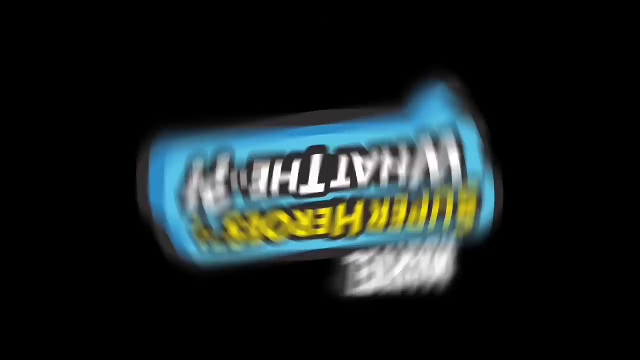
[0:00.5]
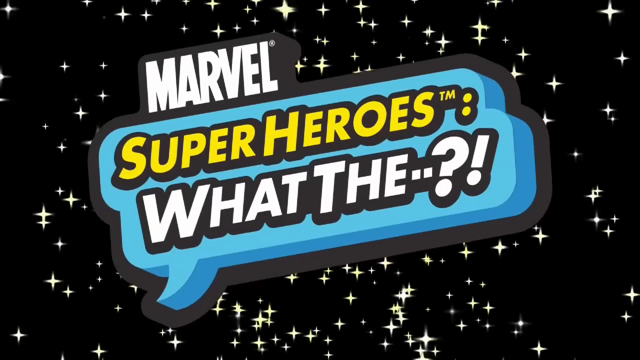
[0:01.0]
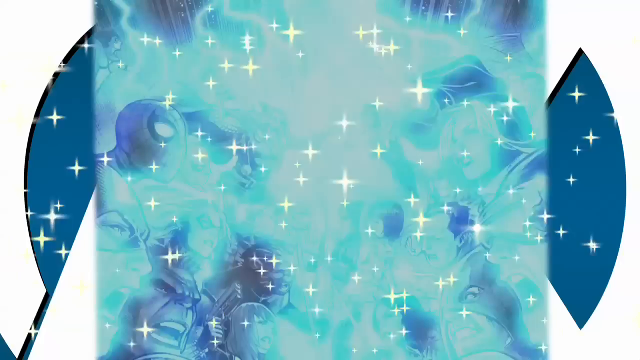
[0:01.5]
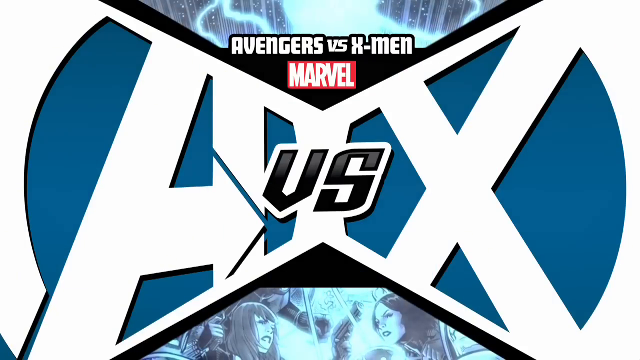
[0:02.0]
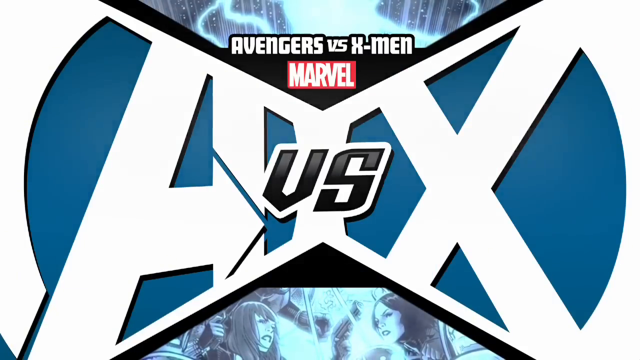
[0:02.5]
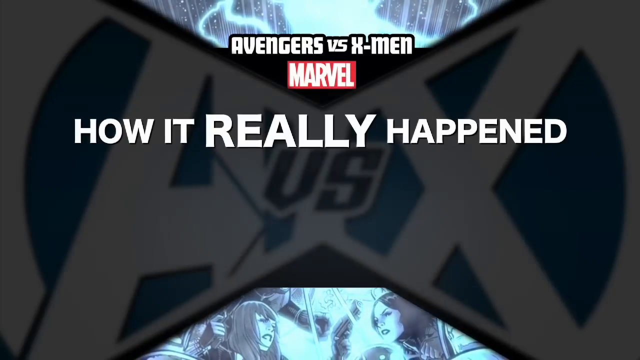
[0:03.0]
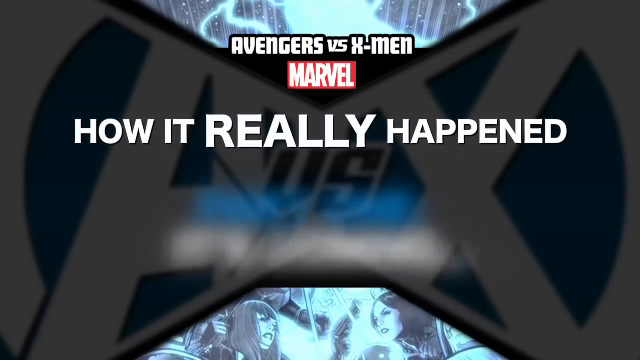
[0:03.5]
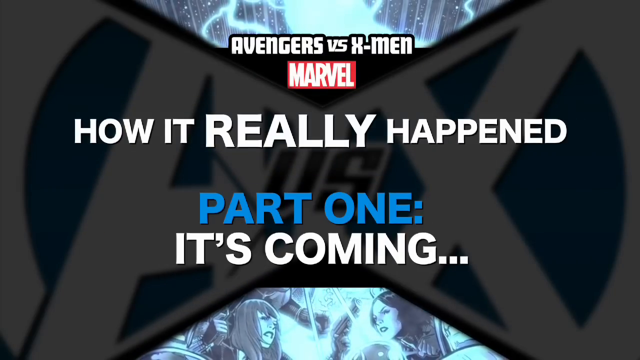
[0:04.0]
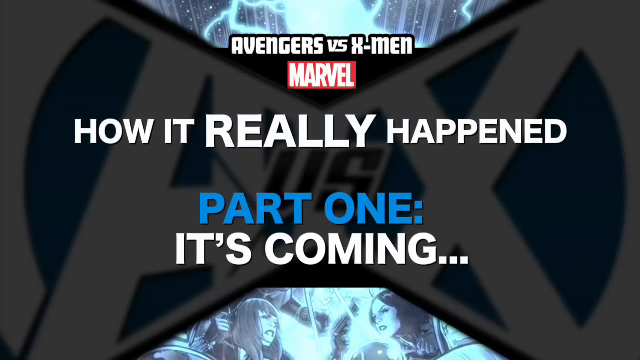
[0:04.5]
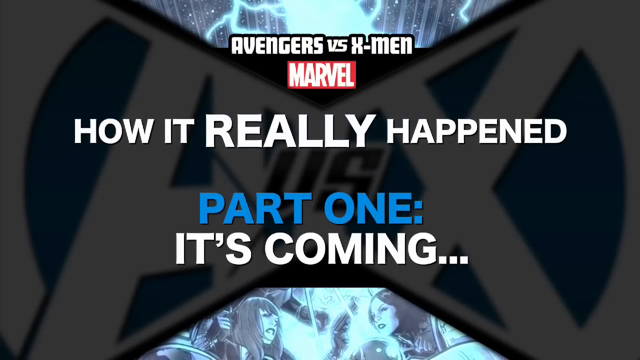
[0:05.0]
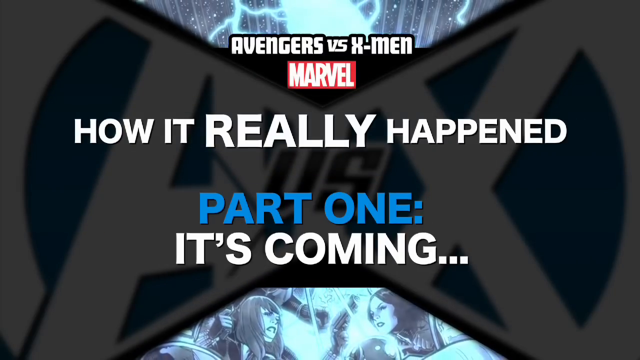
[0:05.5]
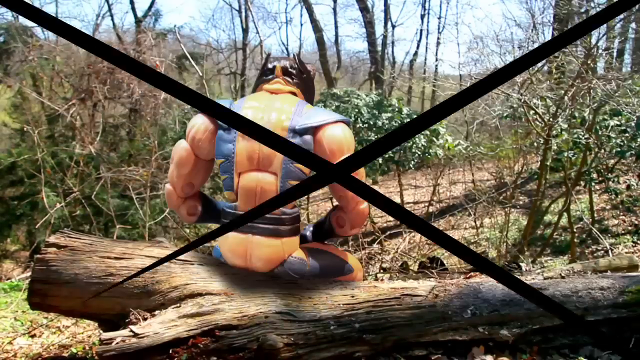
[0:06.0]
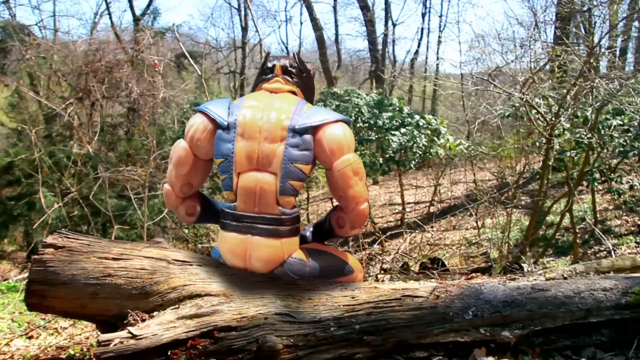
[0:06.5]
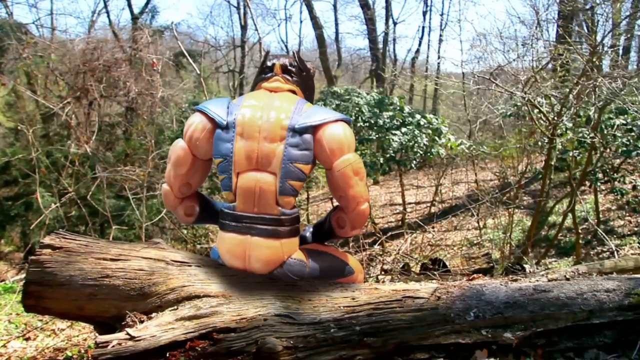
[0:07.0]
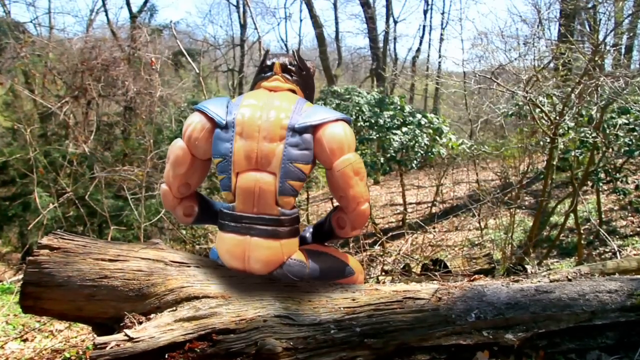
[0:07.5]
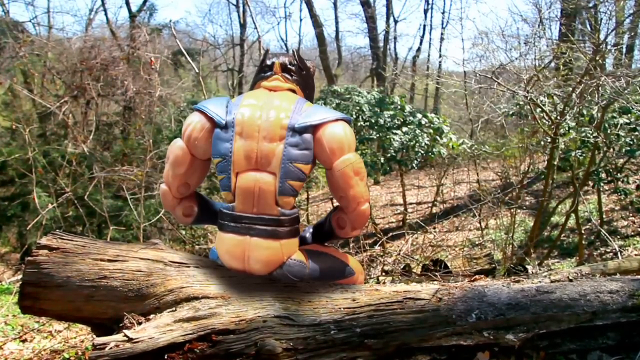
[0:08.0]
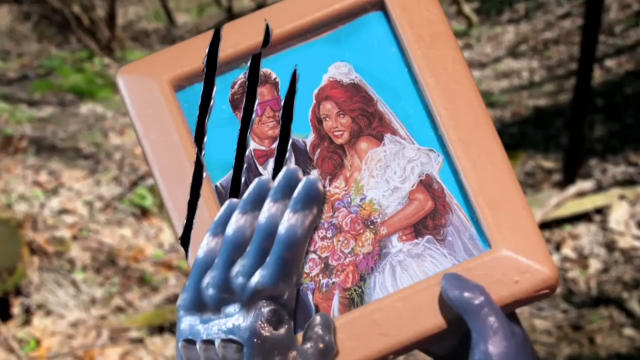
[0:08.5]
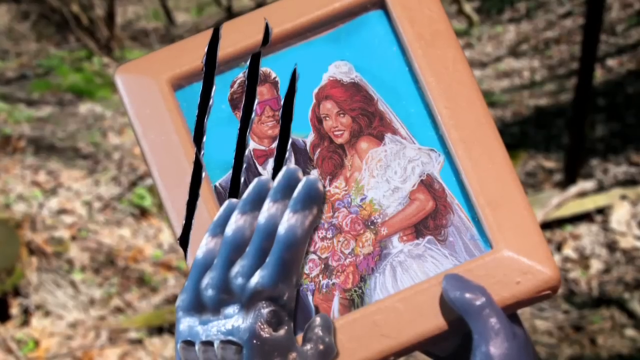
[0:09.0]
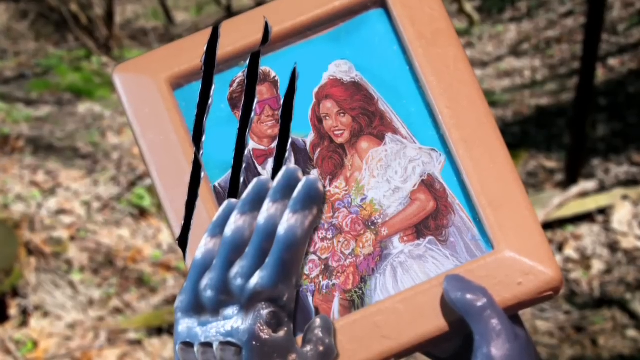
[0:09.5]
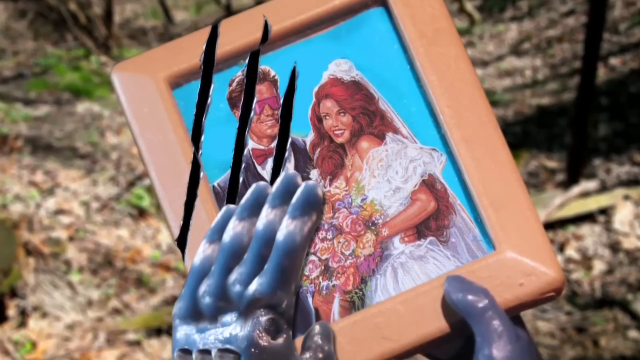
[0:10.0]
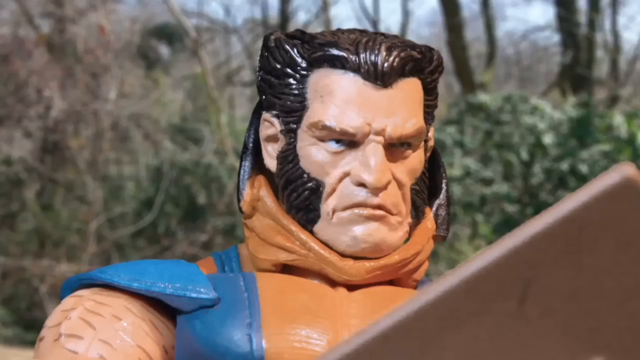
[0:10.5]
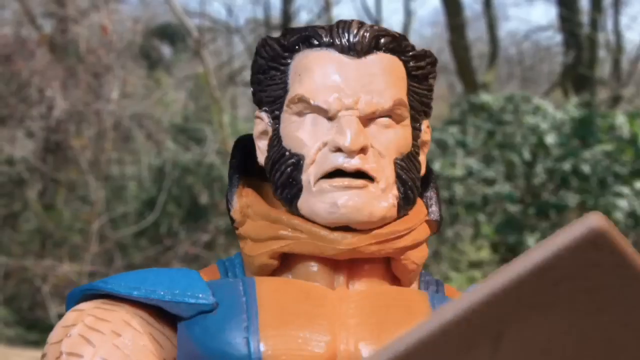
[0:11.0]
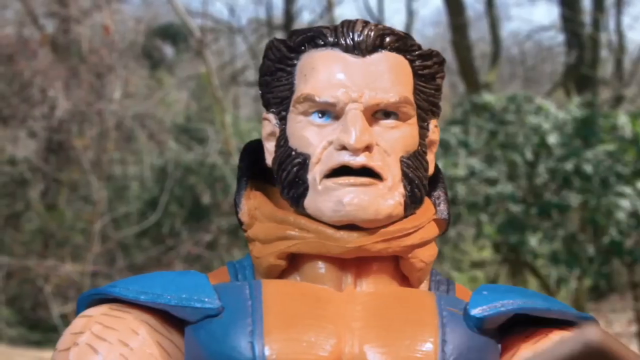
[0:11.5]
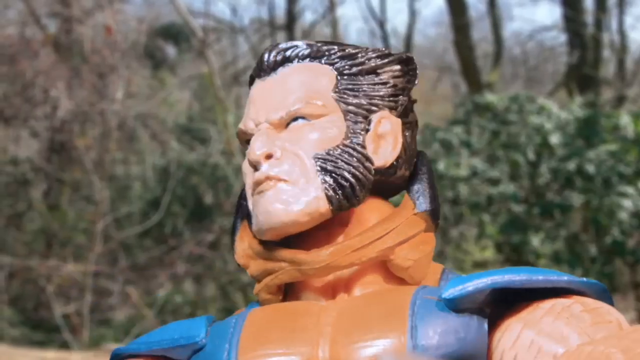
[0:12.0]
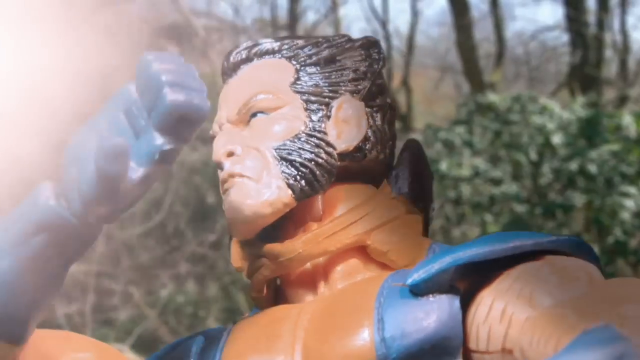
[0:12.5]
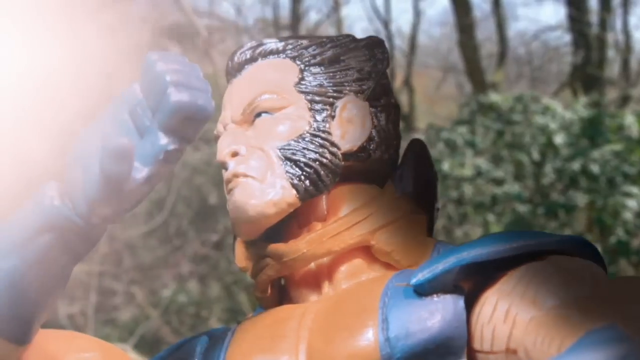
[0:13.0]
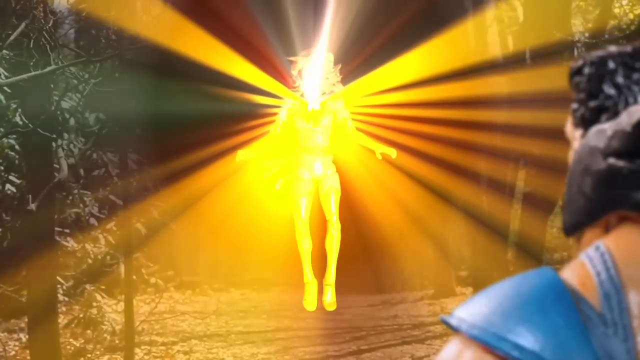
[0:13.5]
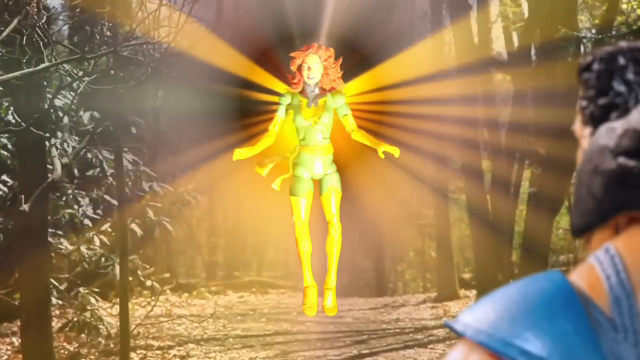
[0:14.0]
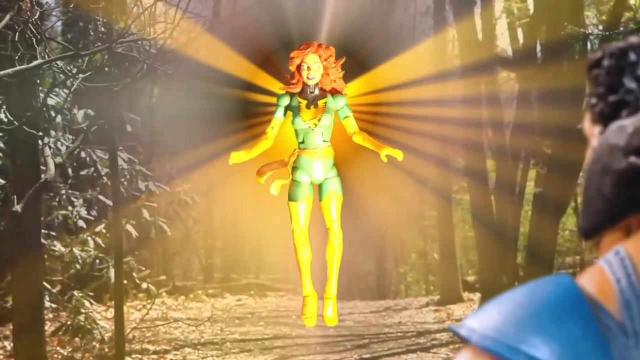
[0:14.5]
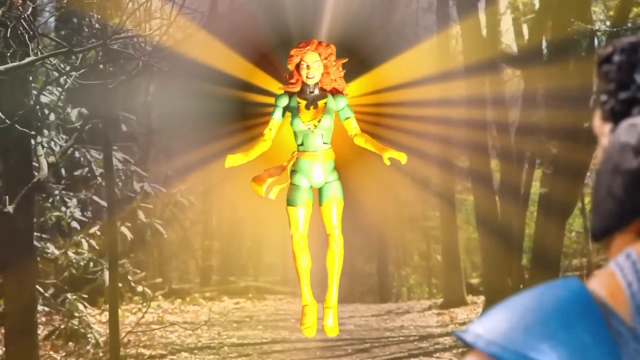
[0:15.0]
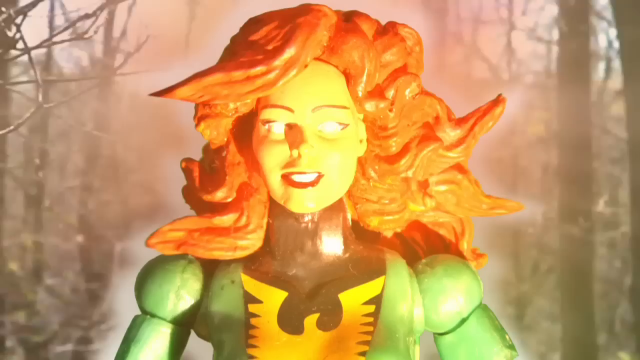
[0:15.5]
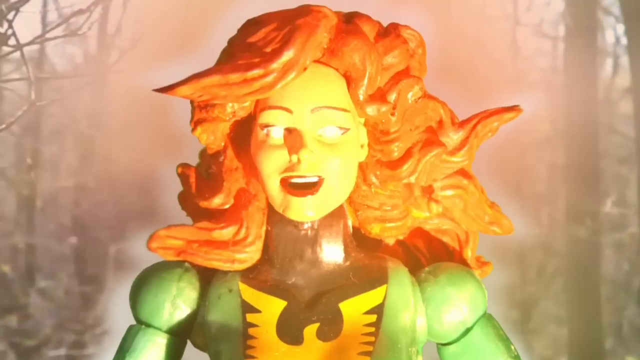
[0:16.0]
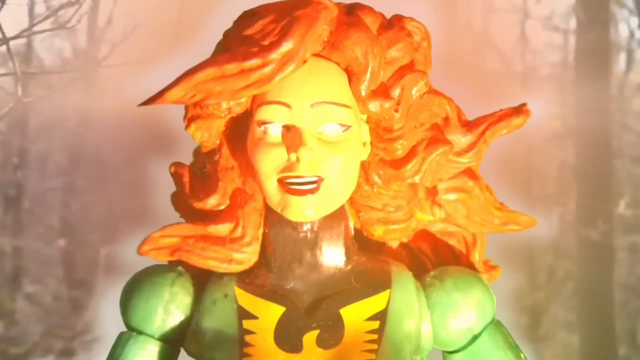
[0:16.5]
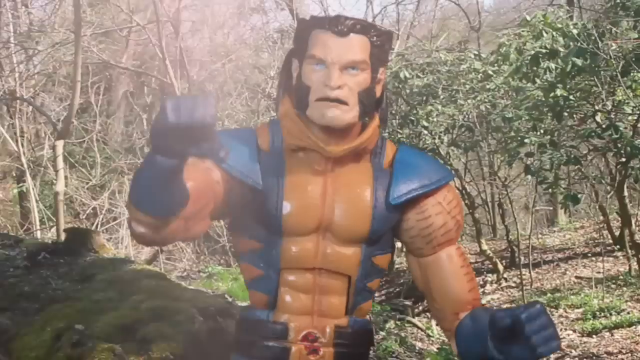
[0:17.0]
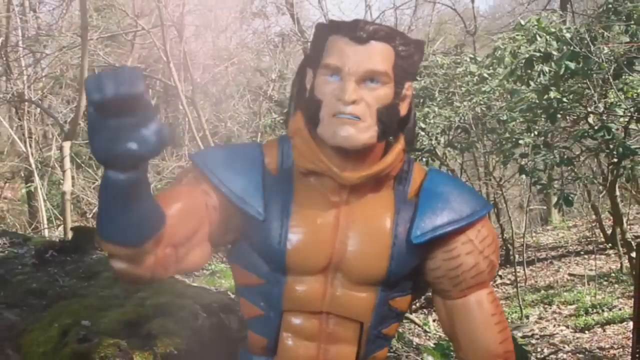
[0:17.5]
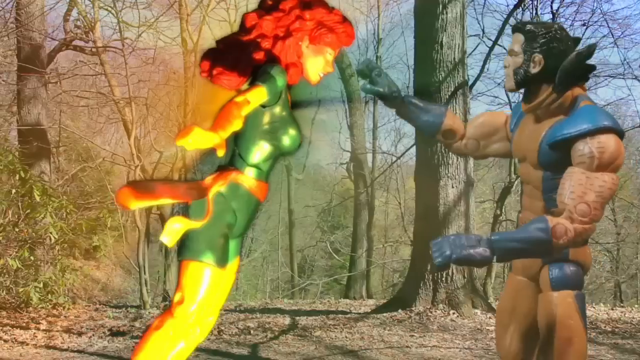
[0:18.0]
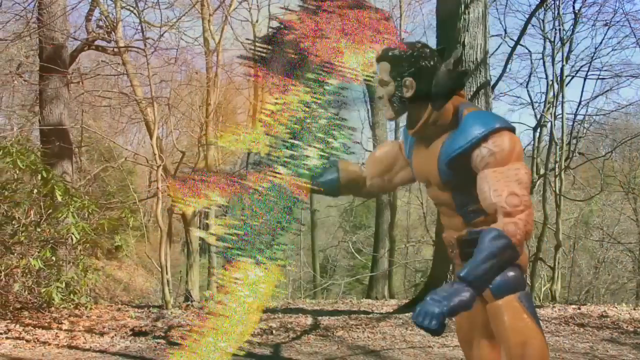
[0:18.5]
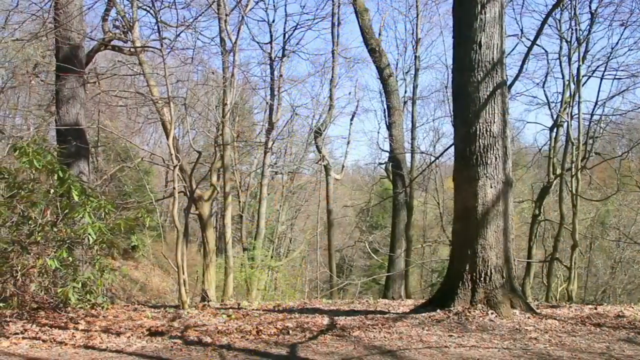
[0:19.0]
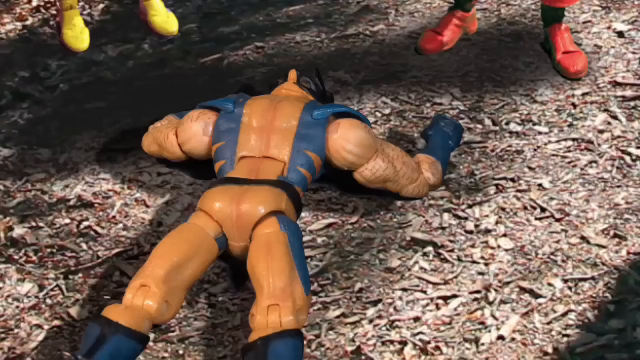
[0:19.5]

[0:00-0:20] A series of signs about Marvel appears. The first says something about heroes, and the second reads "Avengers versus X-Men Marvel how it really happened this is part one it's coming". One of the characters sits on a log holding a picture of a guy and a girl with red marks on it; he touches the picture, then looks up into the distance and sees a goddess coming, a character dressed in green. He goes over and touches her, she disintegrates, and he falls on the floor. He is on the ground along with other plastic characters that are also on the ground. They are all Marvel heroes, like plastic men, but the ground they are on appears to be real, with real dirt, real trees and real mulch.